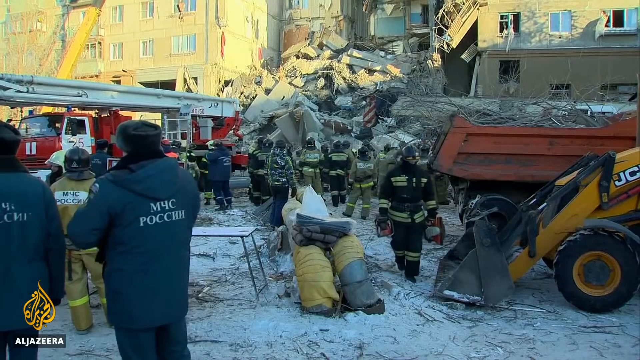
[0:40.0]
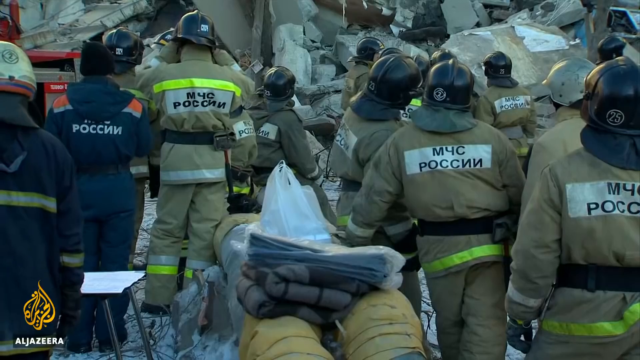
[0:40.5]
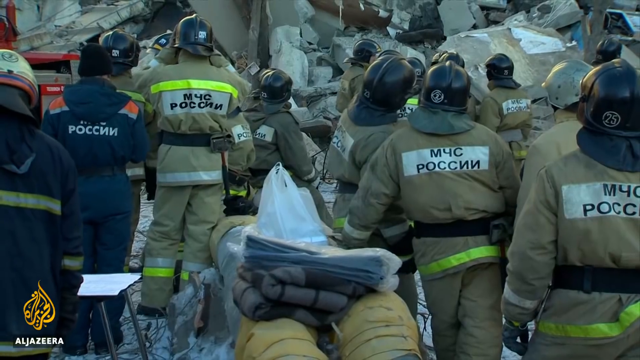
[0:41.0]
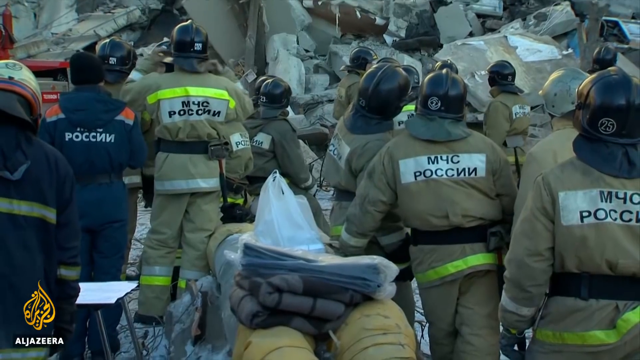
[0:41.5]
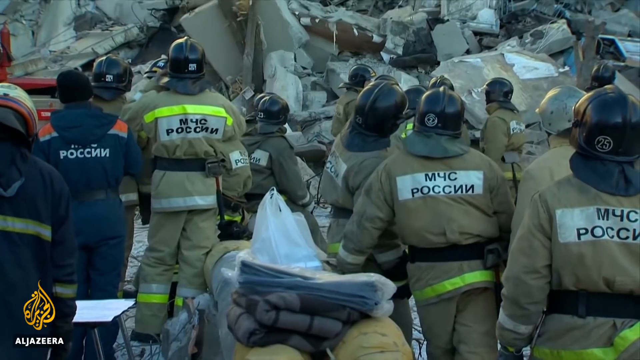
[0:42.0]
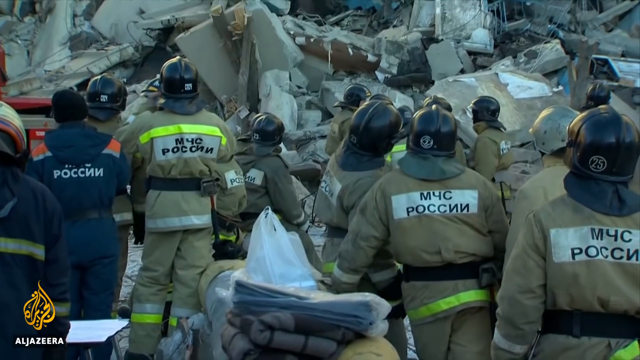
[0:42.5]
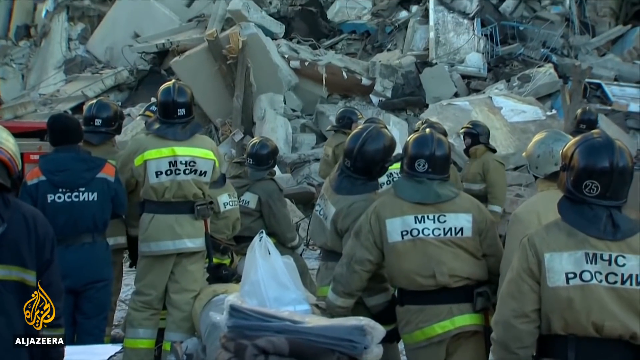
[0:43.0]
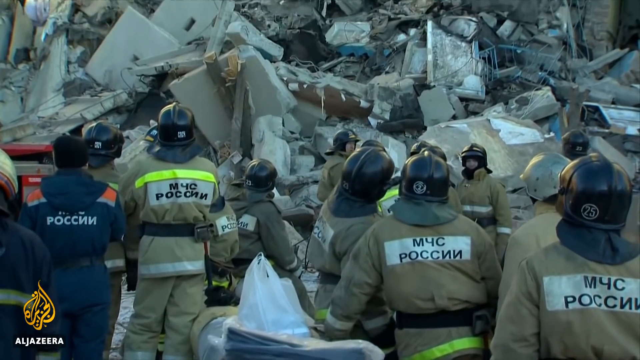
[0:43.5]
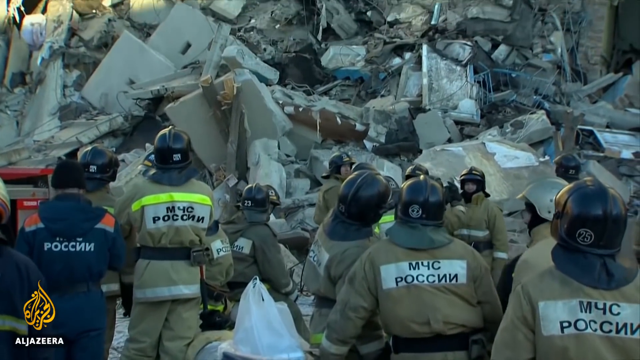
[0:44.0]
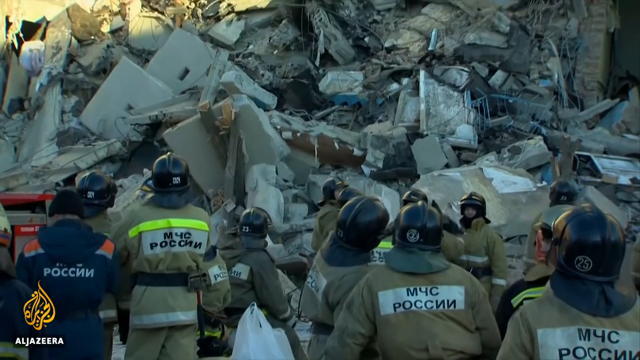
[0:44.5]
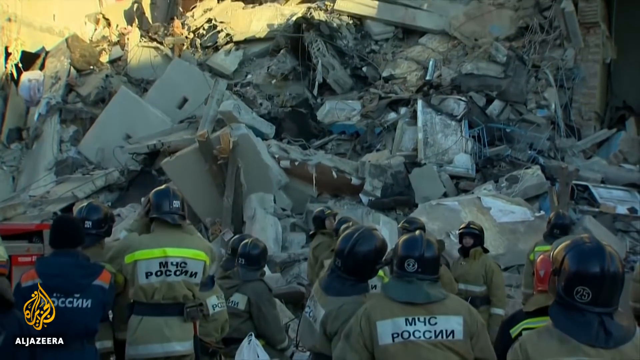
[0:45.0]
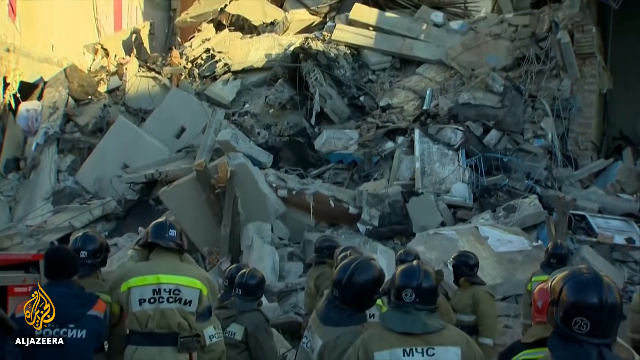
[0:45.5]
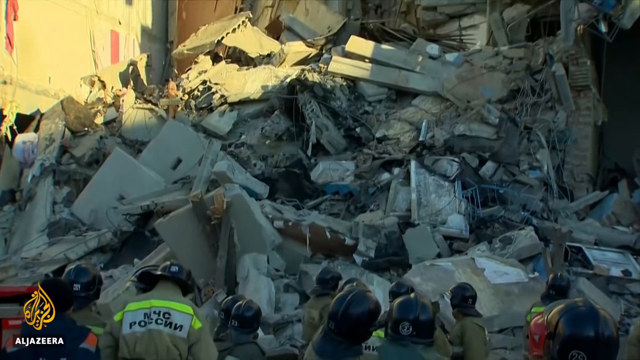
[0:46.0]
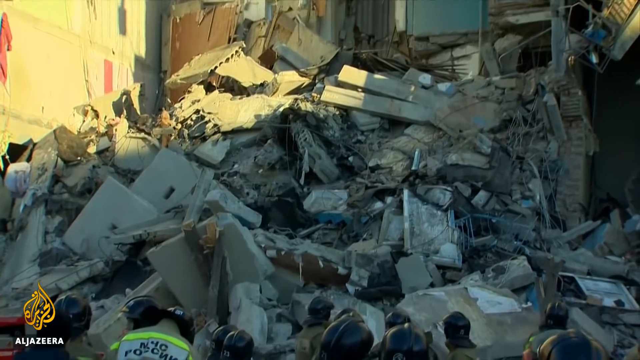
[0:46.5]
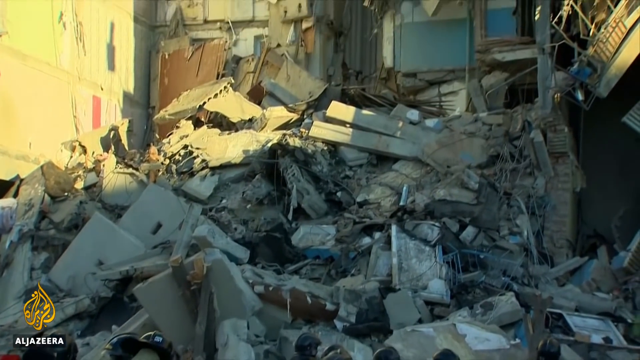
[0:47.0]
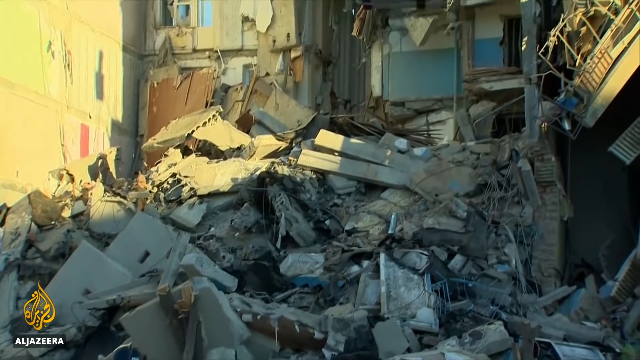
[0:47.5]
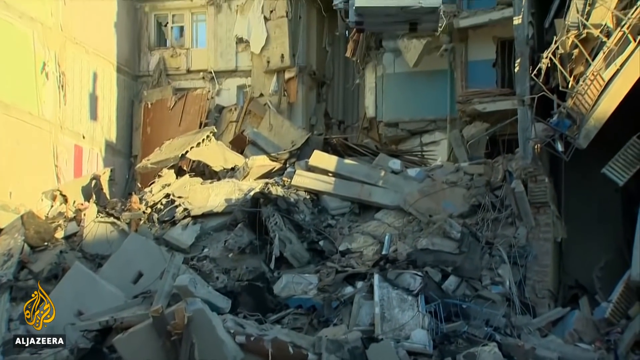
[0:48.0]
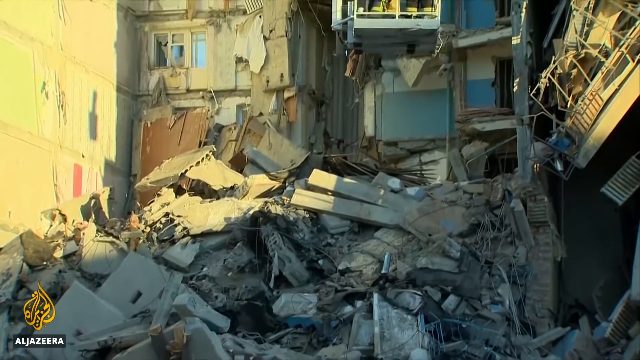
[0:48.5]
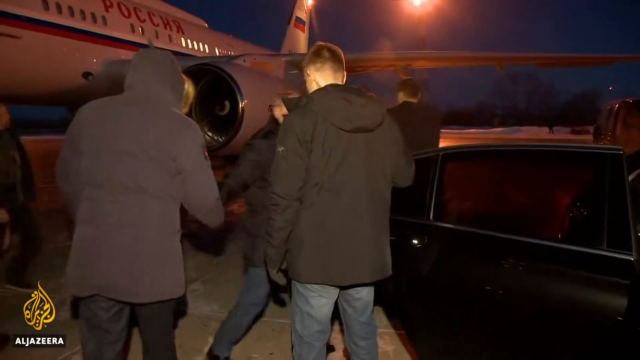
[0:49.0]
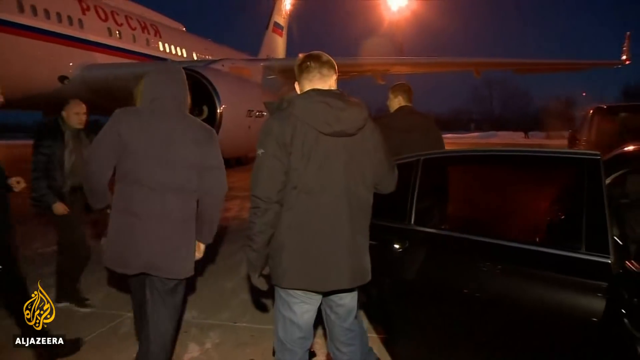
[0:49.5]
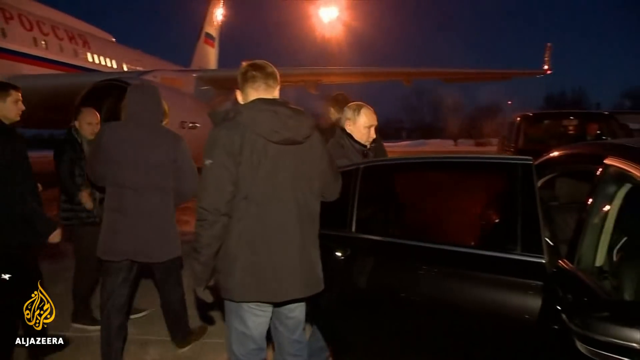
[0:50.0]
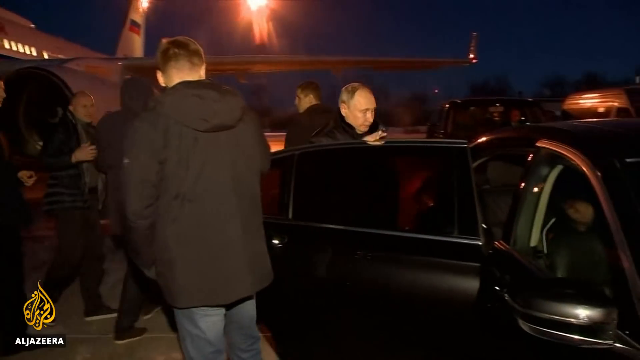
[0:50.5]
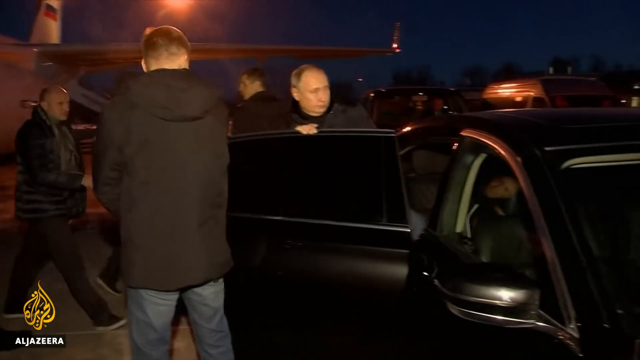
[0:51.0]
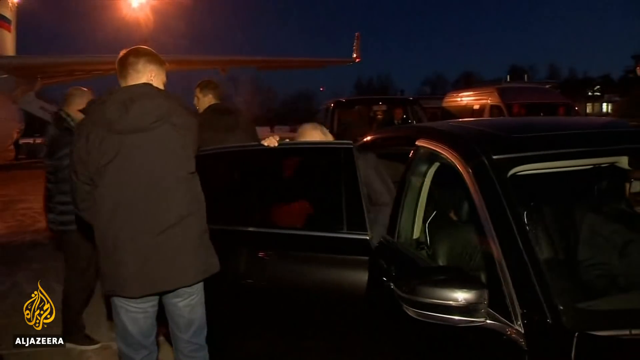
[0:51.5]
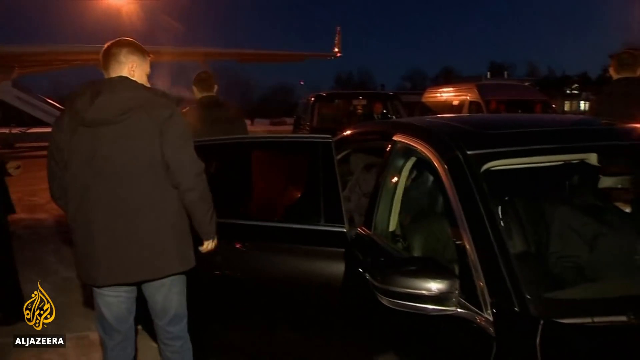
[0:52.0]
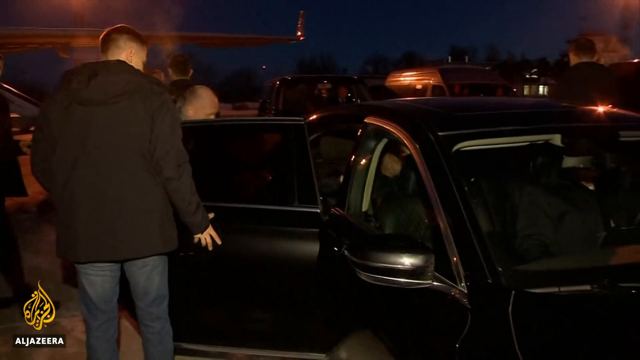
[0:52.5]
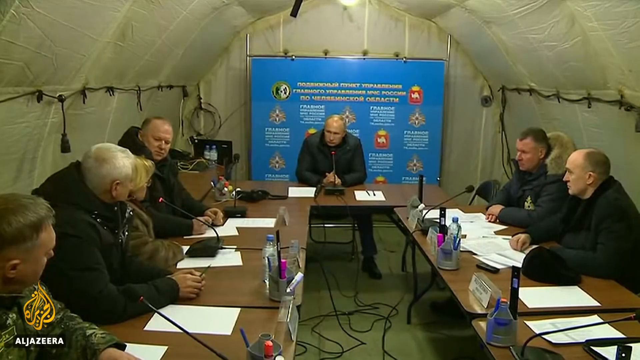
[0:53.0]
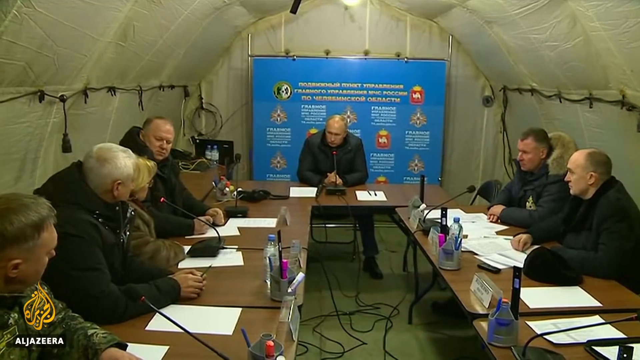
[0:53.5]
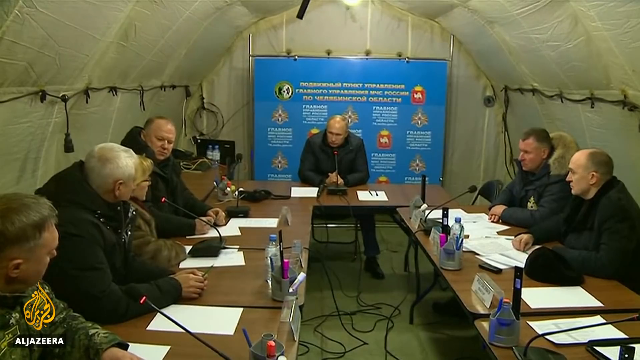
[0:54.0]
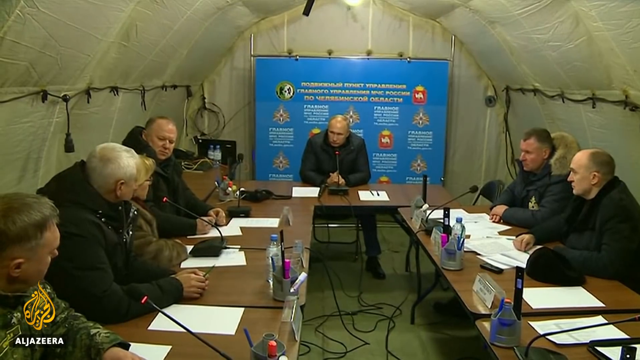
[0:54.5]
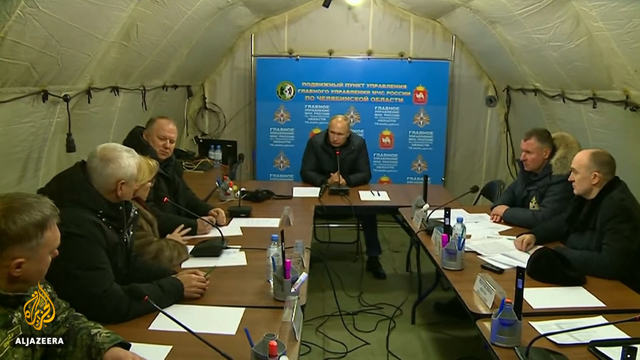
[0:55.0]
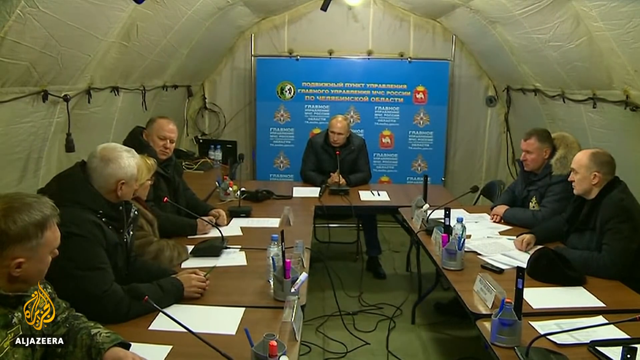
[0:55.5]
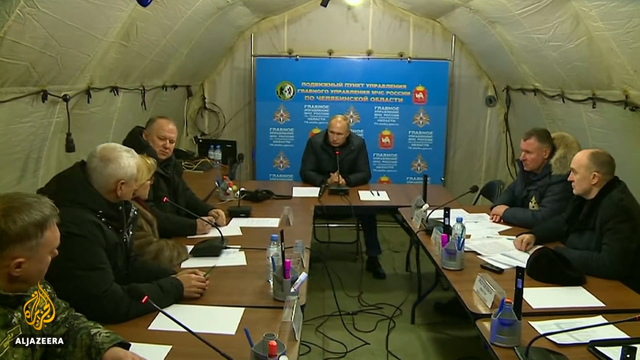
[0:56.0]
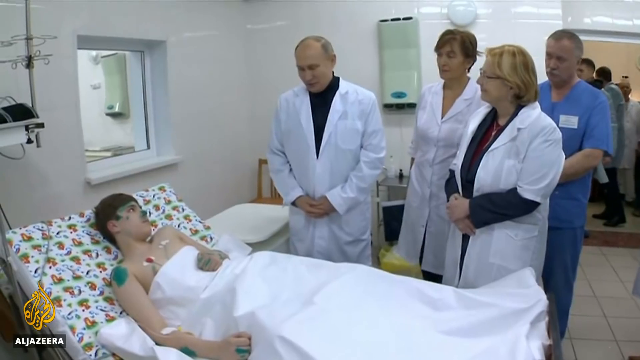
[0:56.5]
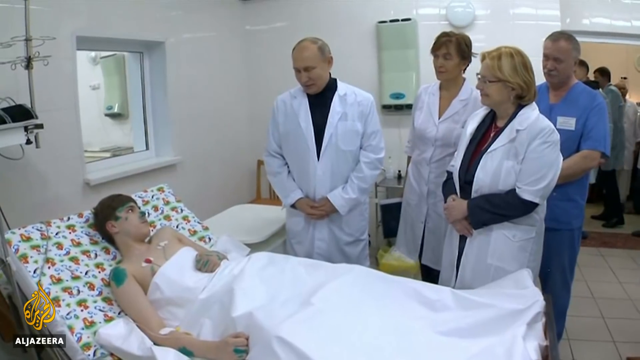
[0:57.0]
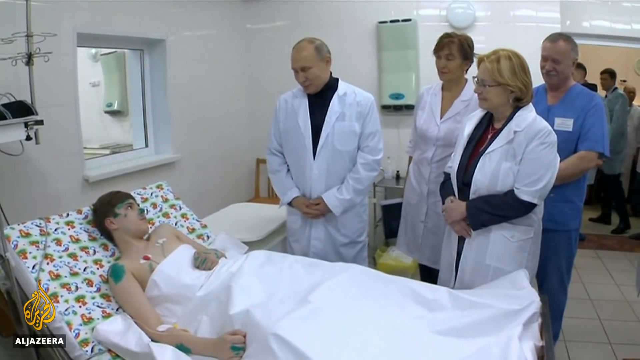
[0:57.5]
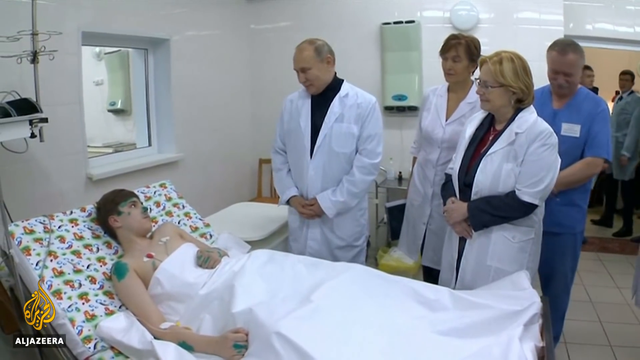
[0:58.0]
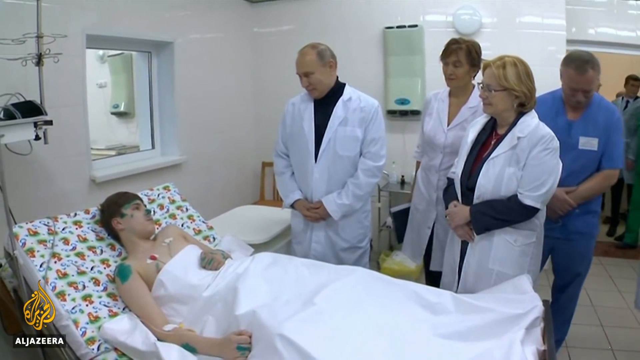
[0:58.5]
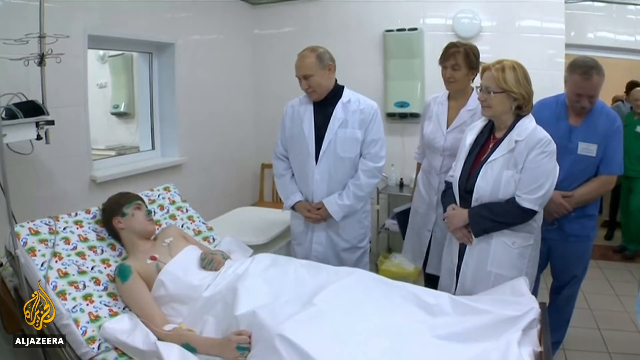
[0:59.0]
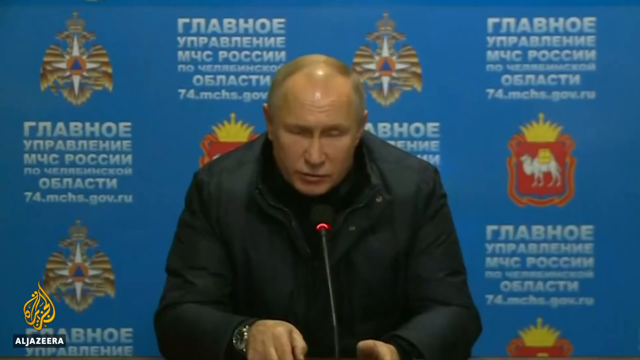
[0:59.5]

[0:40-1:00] Several men appear as if they have just landed at an airport, and another man enters a black car; he seems to be a president or possibly an official in Russia. A meeting then takes place inside a tent, possibly a command center set up at a disaster site, and the person at the head of the table bears a strong resemblance to the Russian president. In a hospital scene, a man resembling the president, wearing a white coat, visits a young male survivor lying in a hospital bed, surrounded by medical staff who also wear white coats.